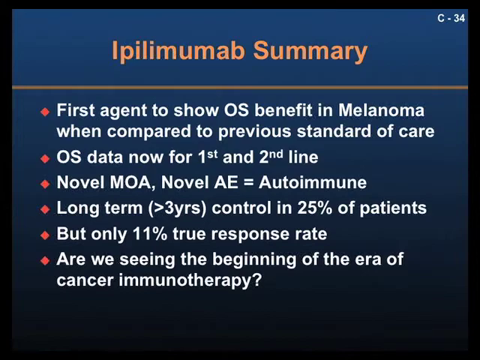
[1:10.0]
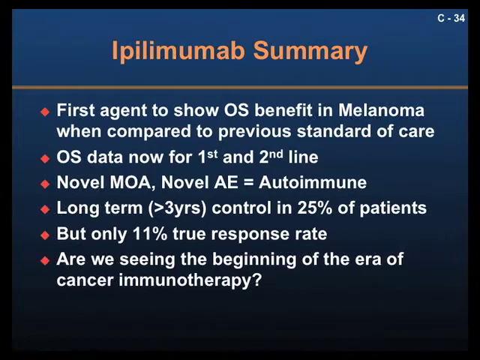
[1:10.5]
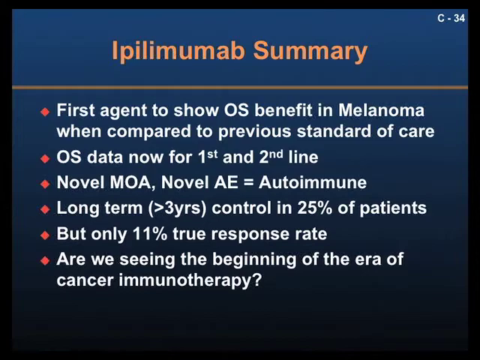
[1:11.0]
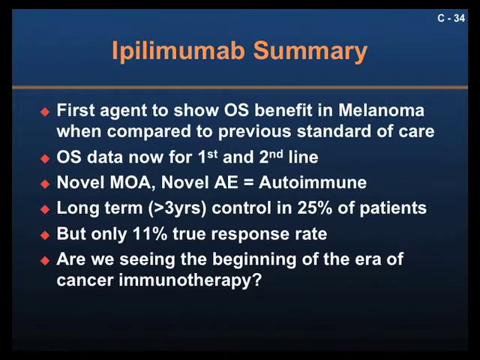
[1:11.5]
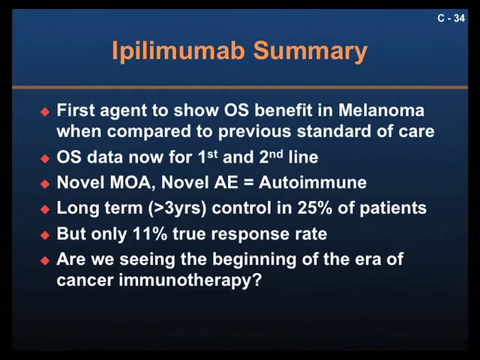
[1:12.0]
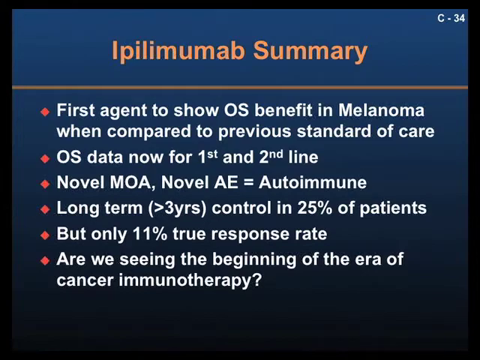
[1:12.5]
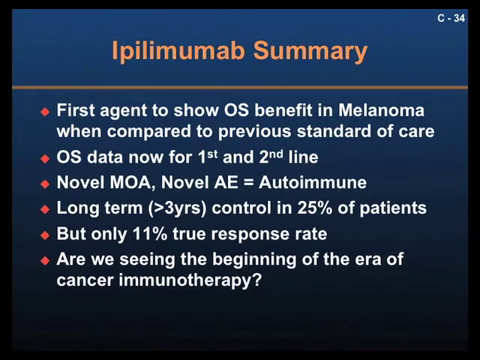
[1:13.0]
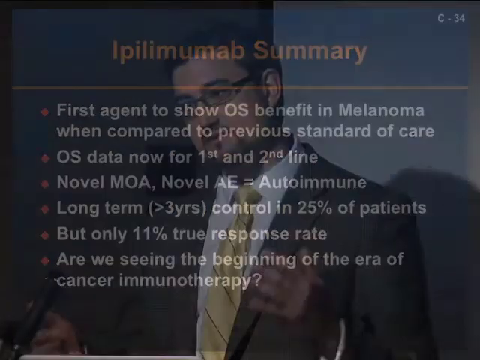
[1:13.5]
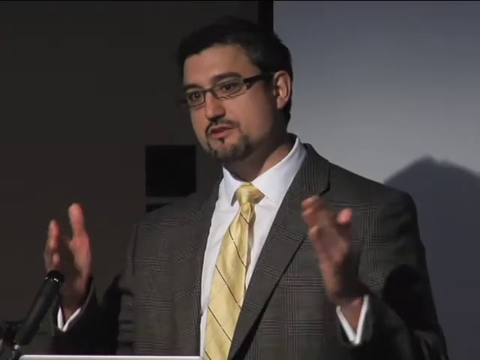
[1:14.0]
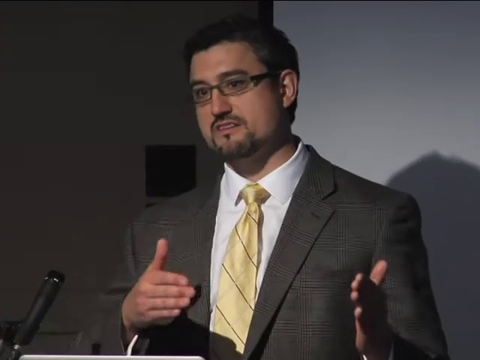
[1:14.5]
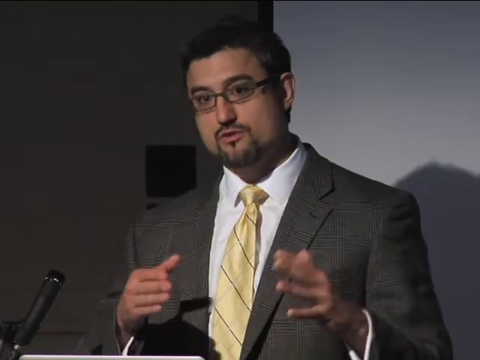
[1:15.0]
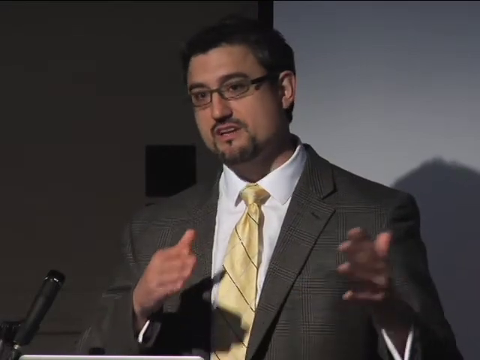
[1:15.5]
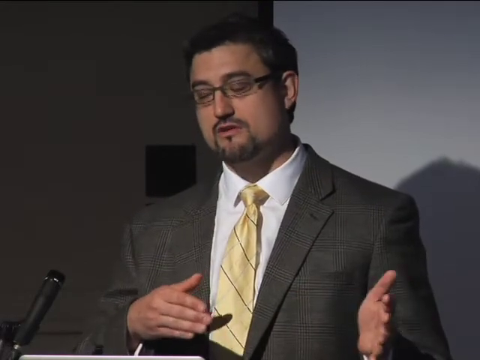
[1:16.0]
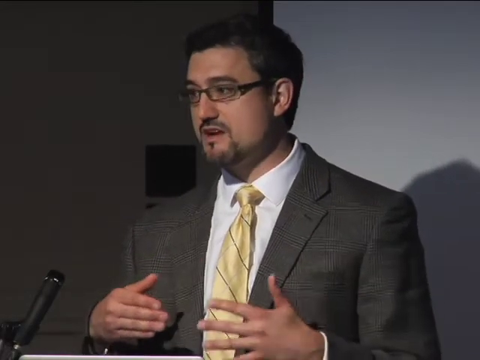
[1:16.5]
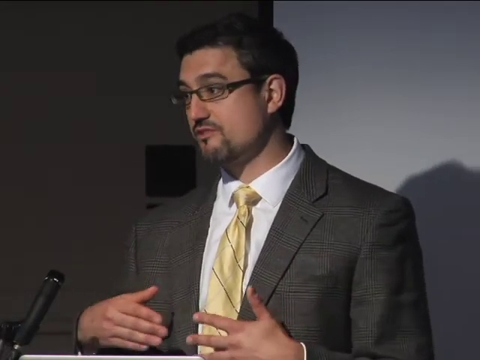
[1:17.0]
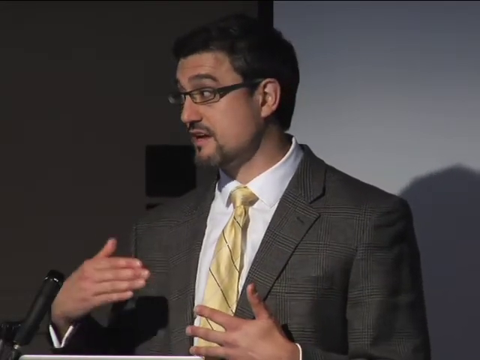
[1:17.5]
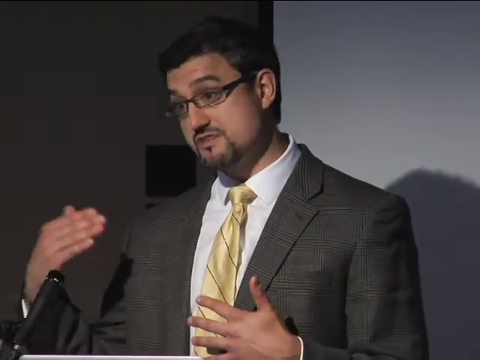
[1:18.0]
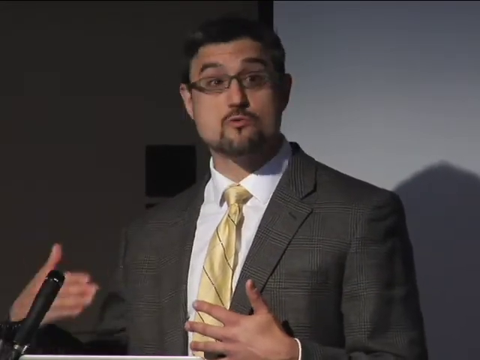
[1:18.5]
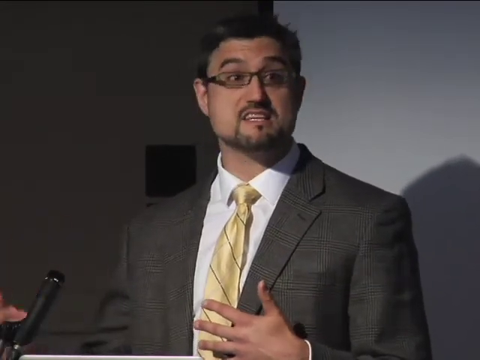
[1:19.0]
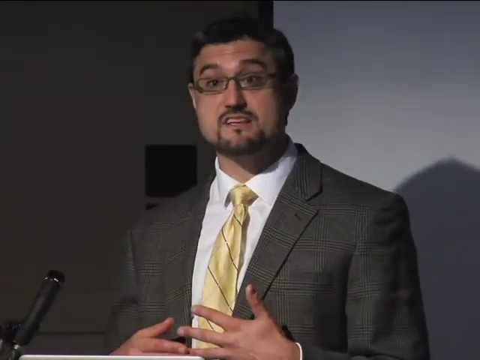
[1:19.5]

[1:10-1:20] The doctor looks at his audience with his hands up in the air, open, palms facing each other, his thumbs at a 90-degree angle to the rest of his fingers and both pointing upward. He moves his spaced-apart hands together from right to left, seemingly to indicate the passage of time or something passing in consecutive order. He turns his head to the right and lifts his eyebrows while speaking; his right hand is open with the palm now facing his chest, and he makes a circular motion with it, apparently indicating something repetitive or cyclic. He then turns his head to the left and speaks to the audience on his left, before moving his head back to the right to look at the slide.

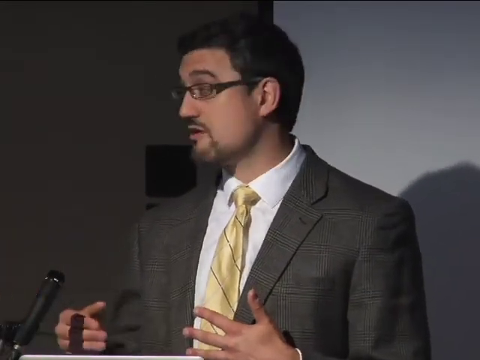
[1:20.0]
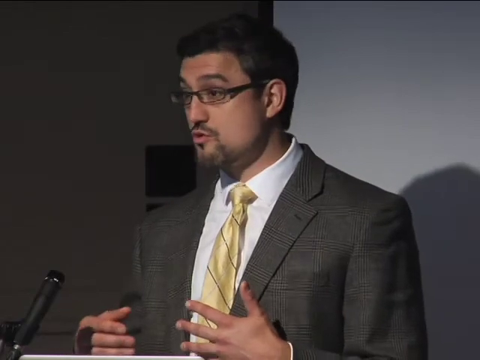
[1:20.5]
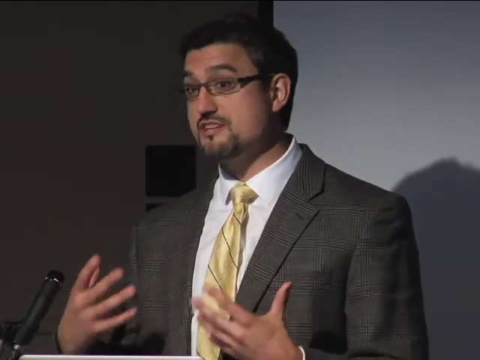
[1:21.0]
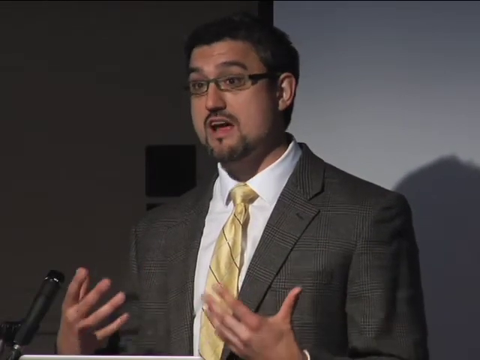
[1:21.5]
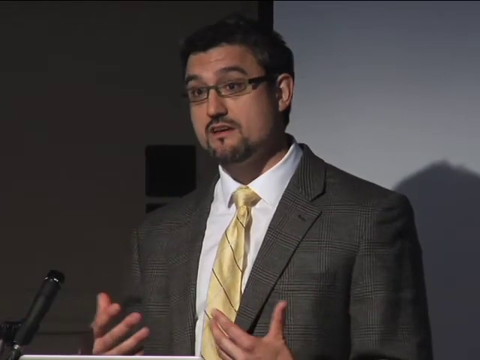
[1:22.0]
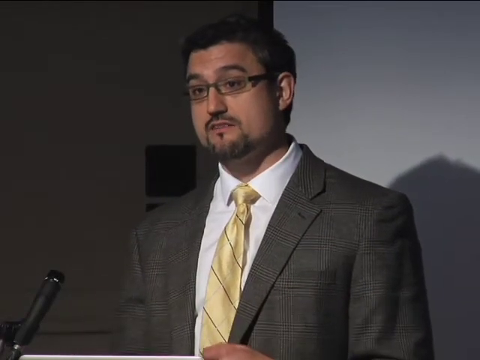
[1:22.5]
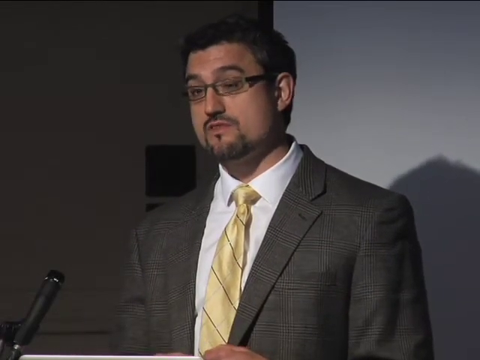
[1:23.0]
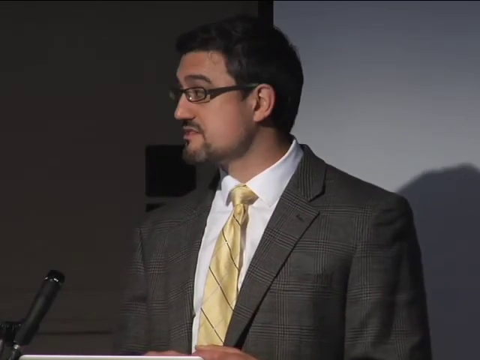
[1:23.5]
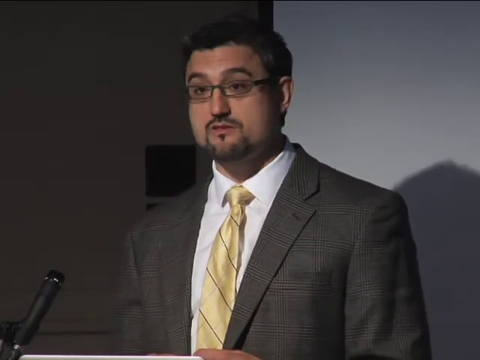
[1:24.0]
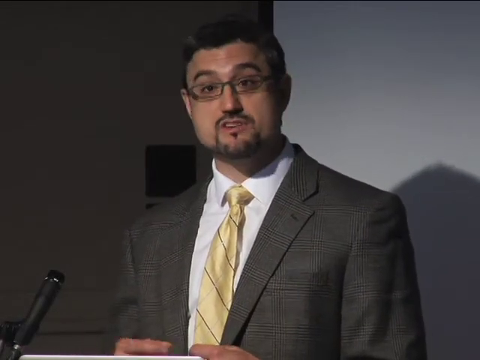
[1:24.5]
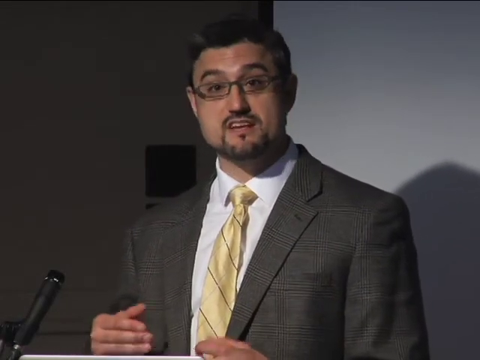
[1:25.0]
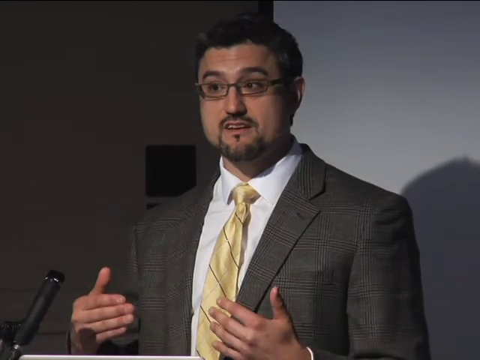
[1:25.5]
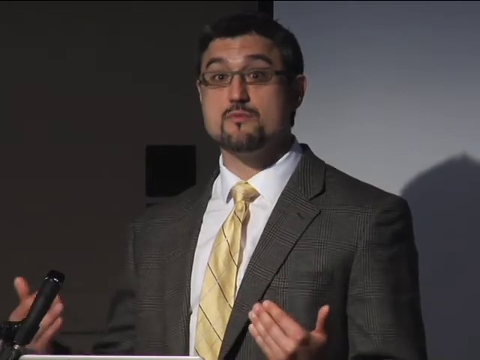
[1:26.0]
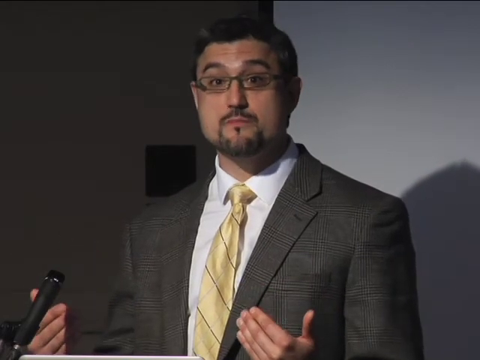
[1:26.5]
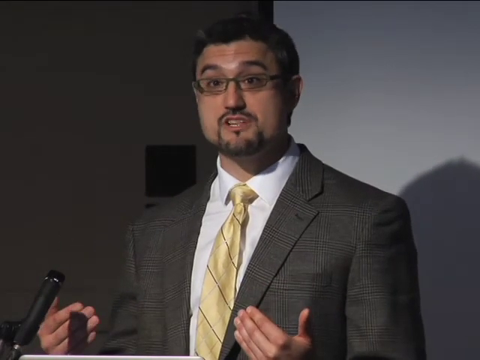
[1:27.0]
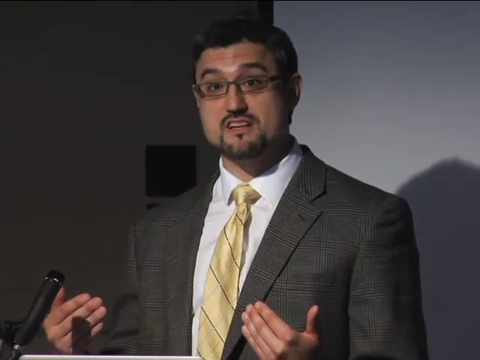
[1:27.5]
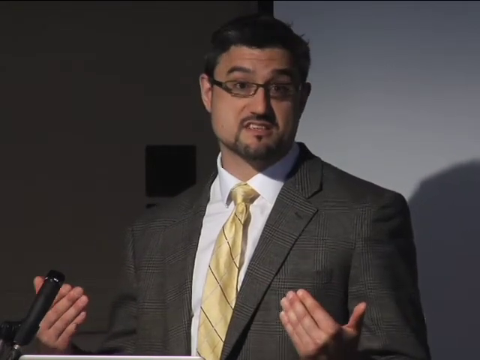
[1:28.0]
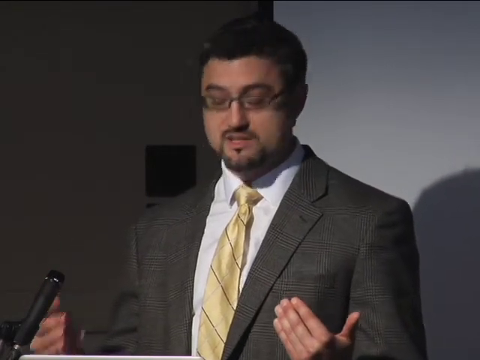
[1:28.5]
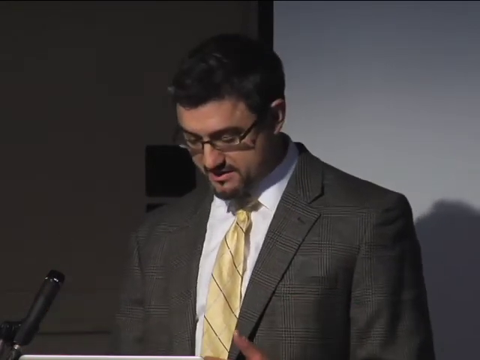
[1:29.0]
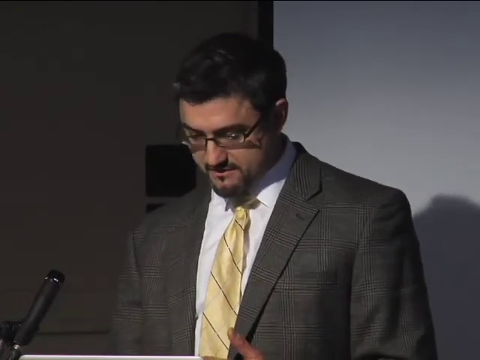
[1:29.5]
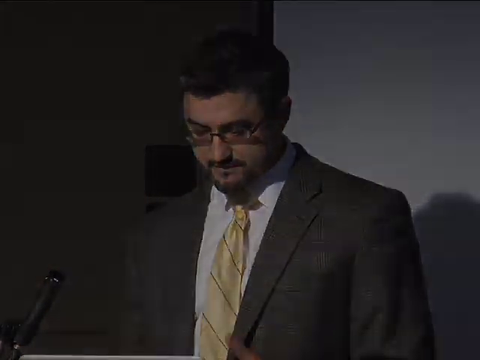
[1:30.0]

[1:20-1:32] The speaker behind the microphone looks directly in front of him at the audience. Both of his hands are in front of him with the fingers splayed and the open palms facing his chest, and as he speaks he moves them up and down in a waving, flapping fashion, apparently emphasizing a point. He puts his hands down, looks at the slide to the right again, and looks back at the audience. He lifts his eyebrows and opens his eyes wide, seemingly very interested in his topic and trying to get his point across.